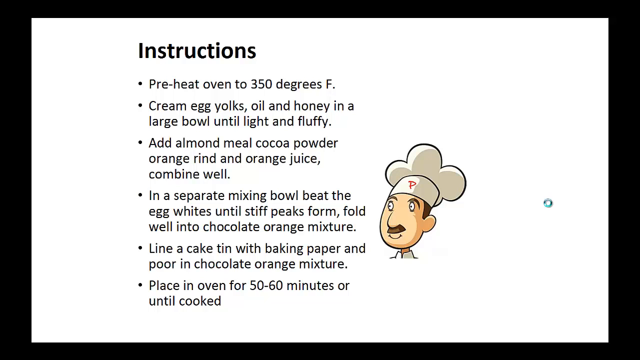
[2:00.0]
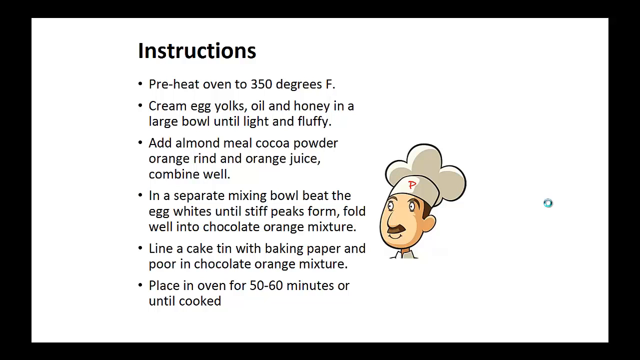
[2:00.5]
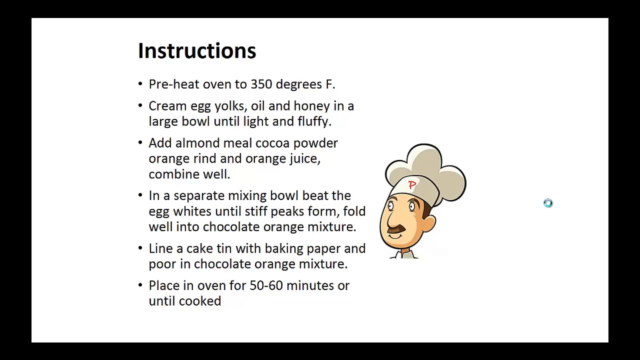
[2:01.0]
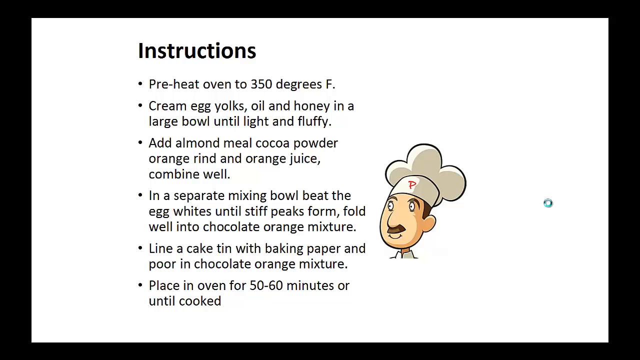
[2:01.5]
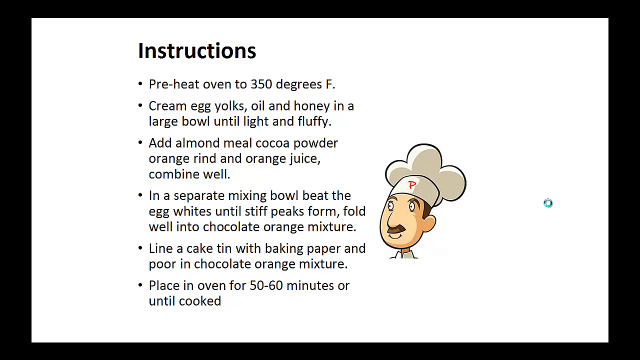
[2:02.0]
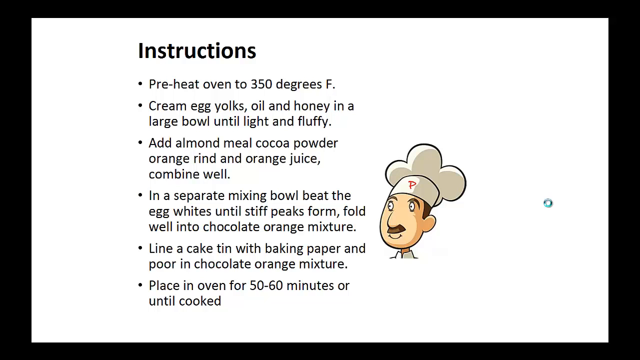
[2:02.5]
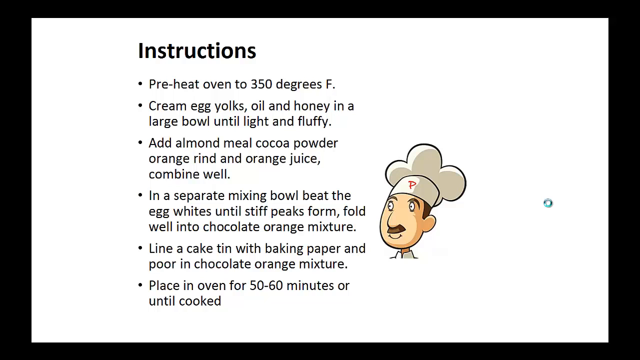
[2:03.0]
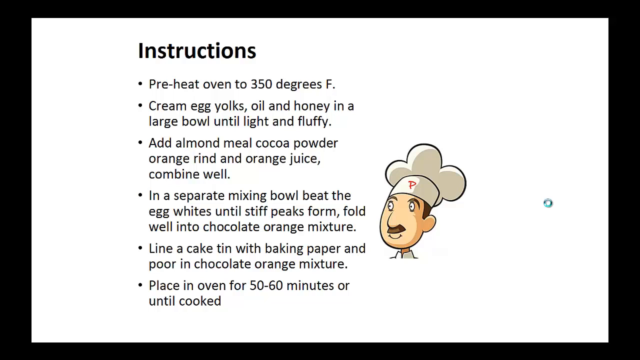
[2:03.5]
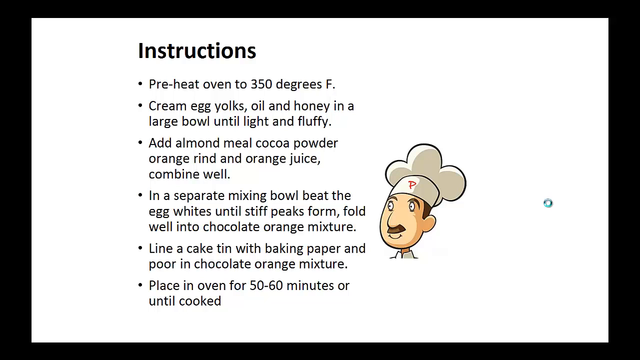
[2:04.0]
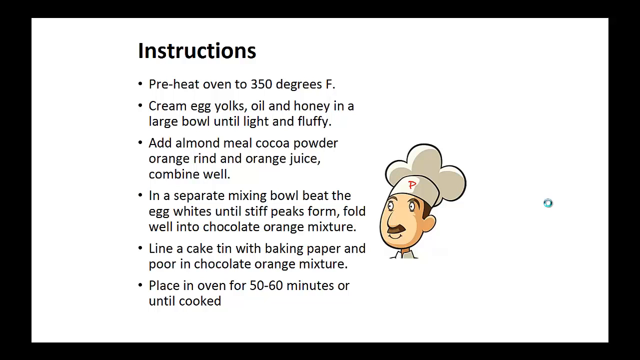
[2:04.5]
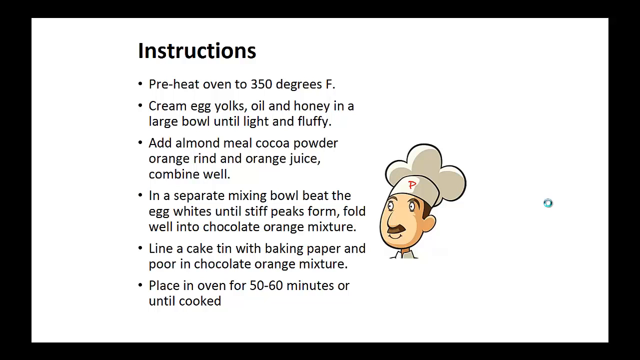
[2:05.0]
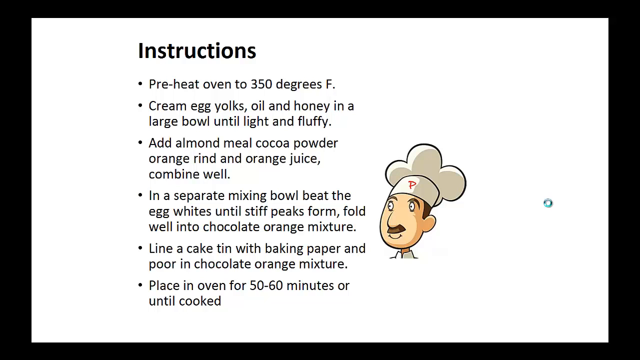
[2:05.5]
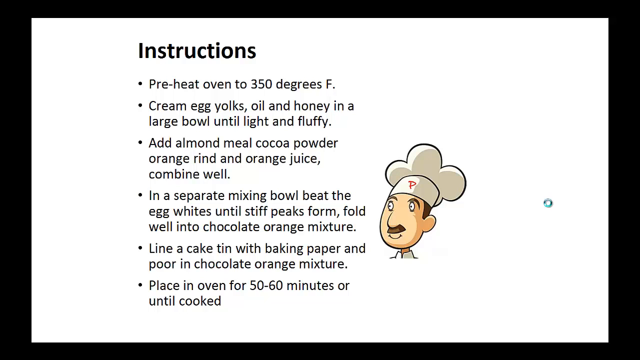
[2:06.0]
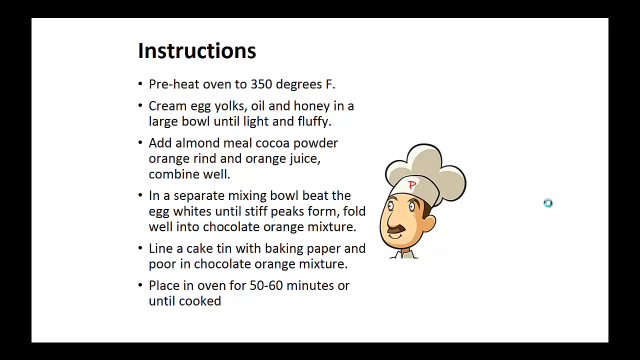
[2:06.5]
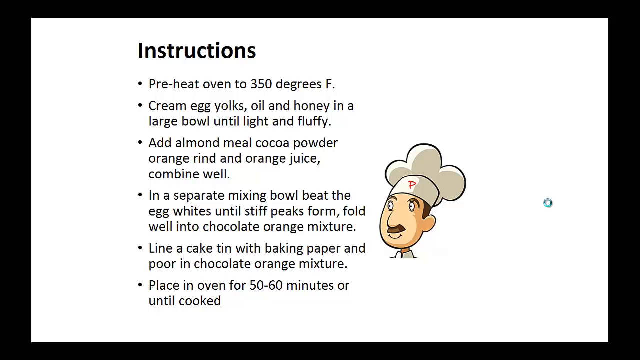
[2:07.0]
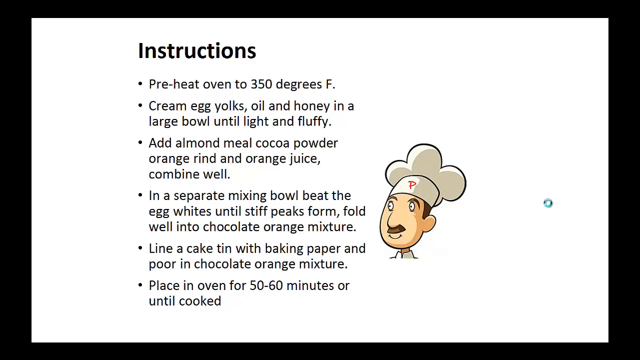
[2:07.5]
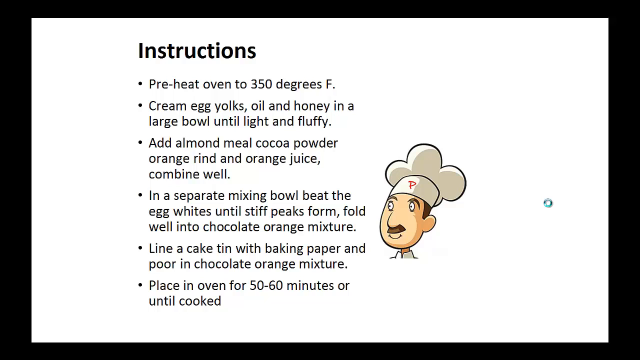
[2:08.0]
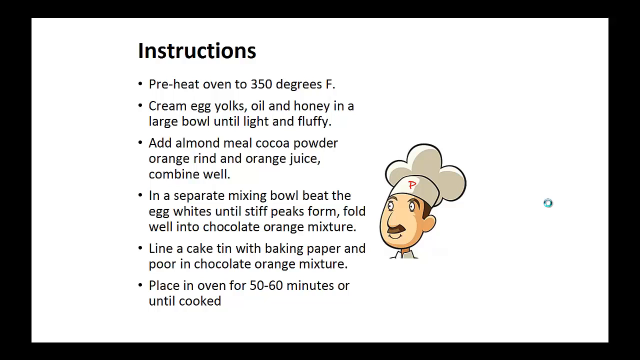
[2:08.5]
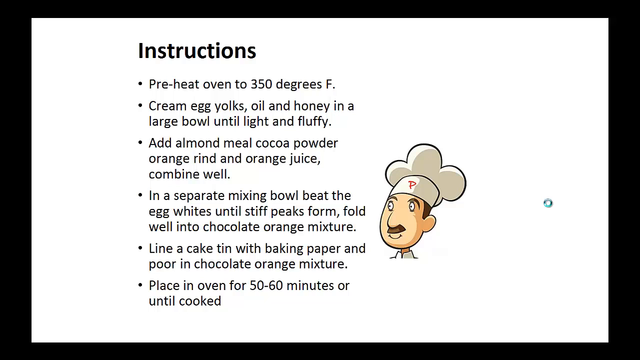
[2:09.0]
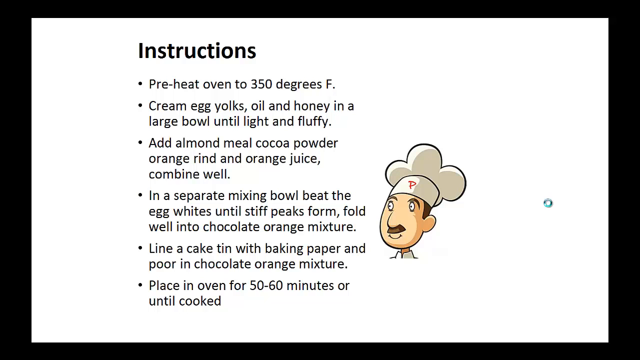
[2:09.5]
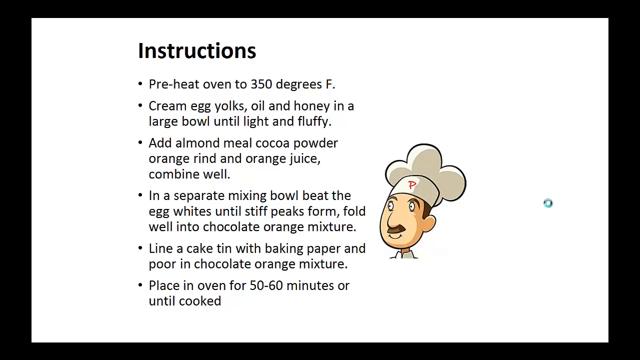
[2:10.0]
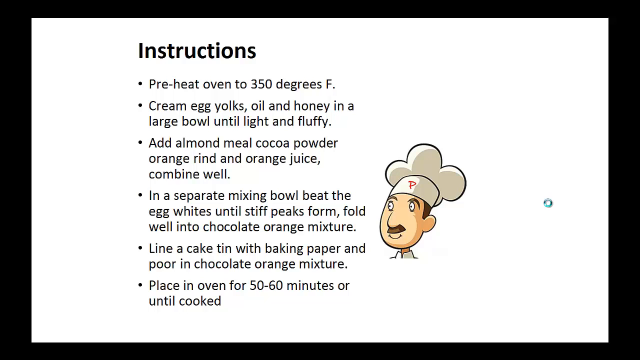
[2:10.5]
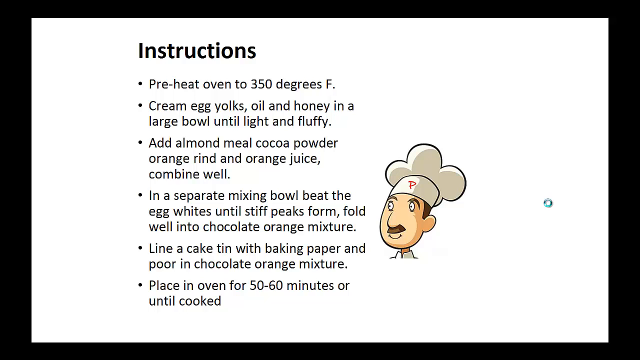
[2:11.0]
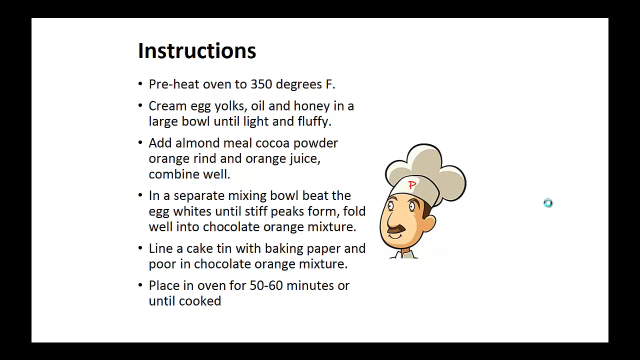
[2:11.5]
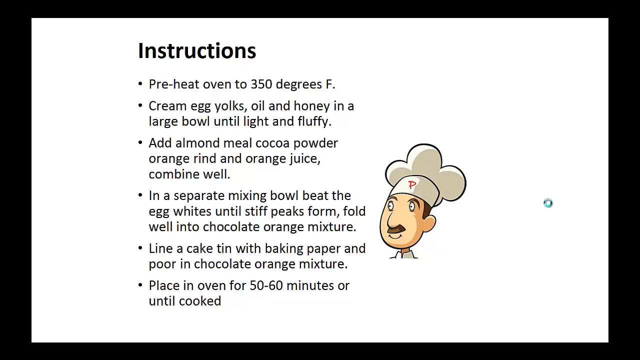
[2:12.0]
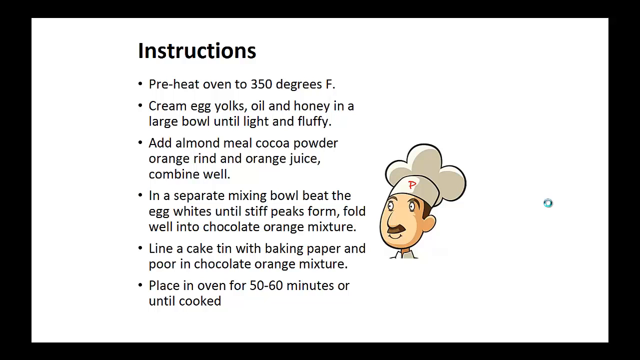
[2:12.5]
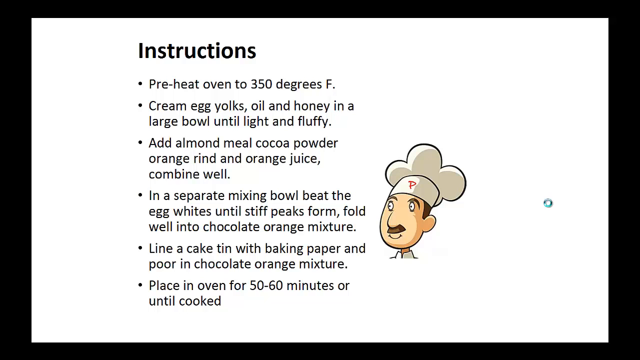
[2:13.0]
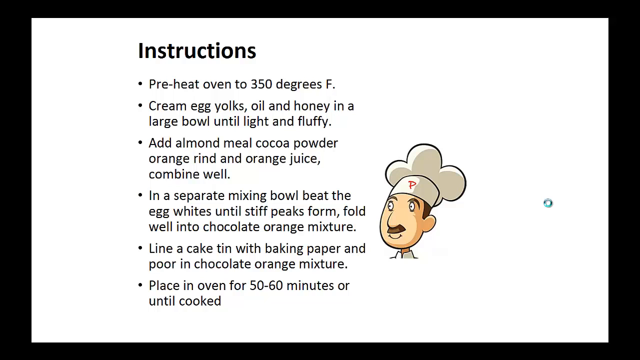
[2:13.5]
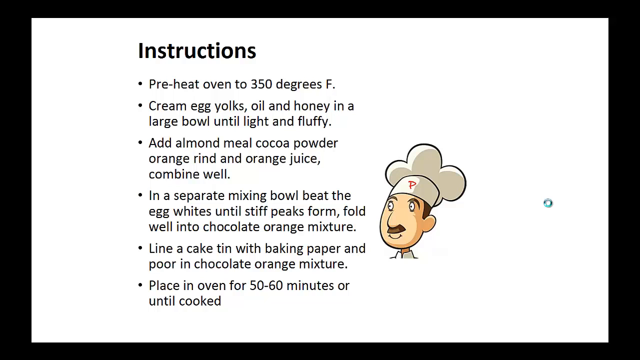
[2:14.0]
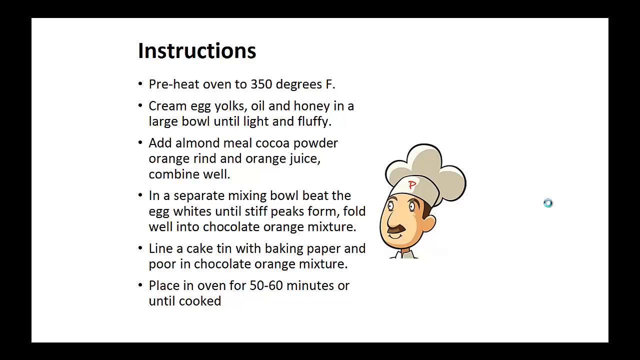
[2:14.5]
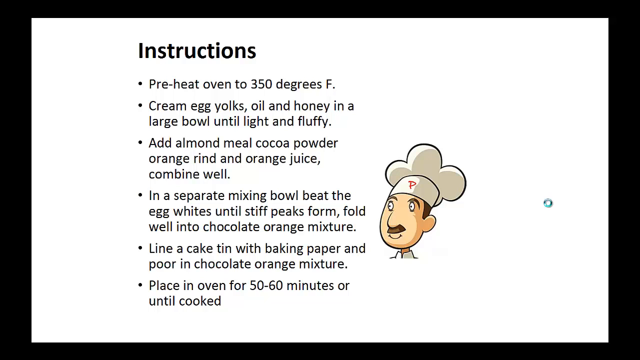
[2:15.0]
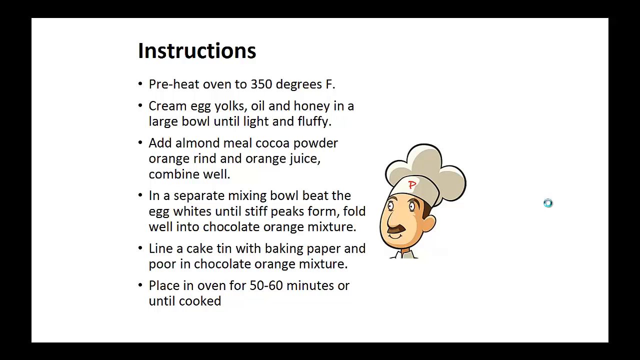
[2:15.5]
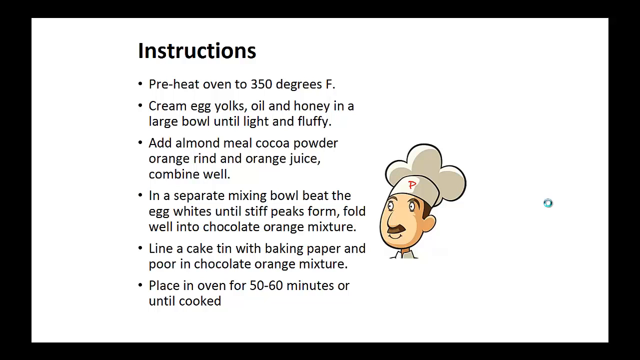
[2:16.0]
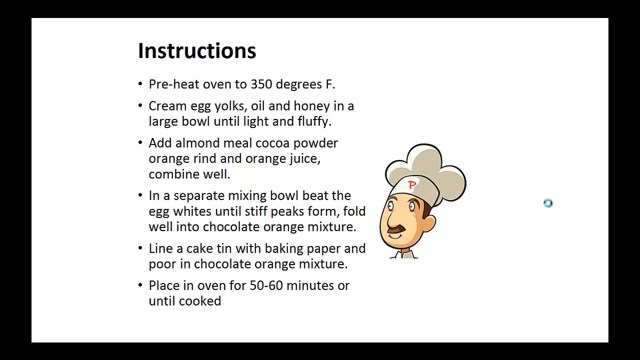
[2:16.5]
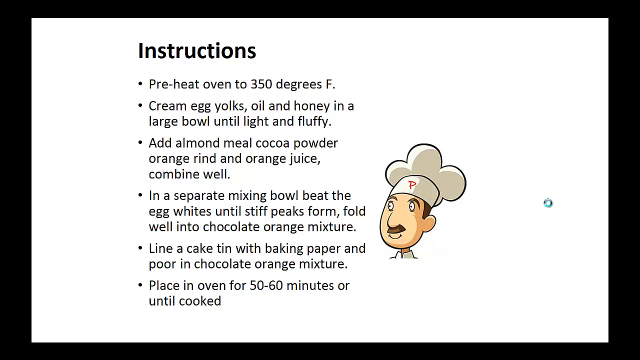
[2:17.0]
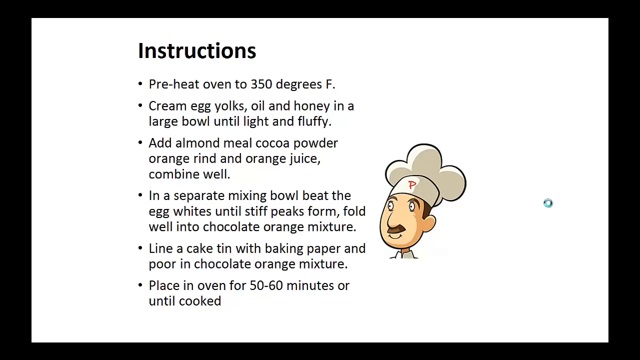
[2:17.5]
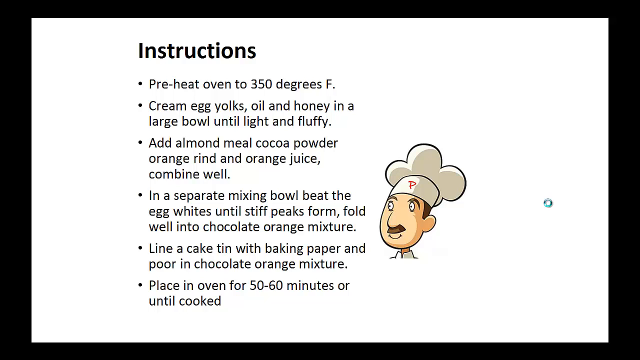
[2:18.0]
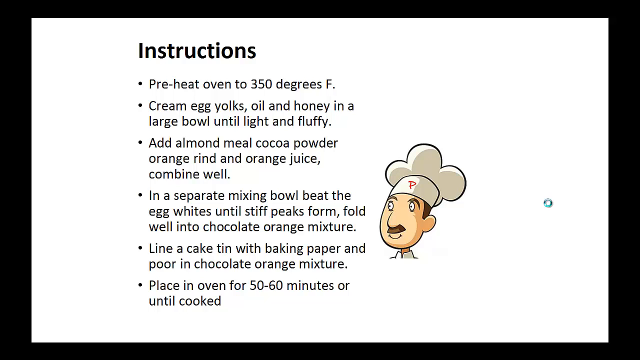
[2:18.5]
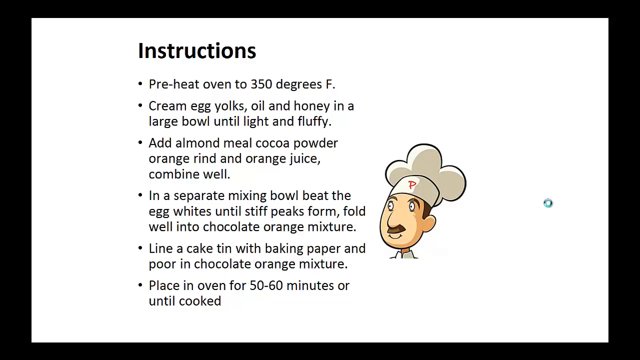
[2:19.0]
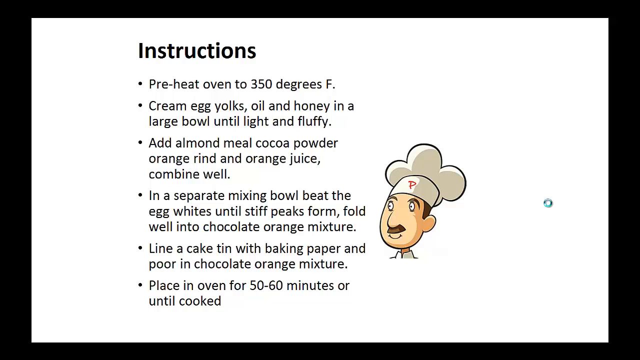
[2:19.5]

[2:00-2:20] The frame still has a black border on the sides, top and bottom around a white base, with the green circle on the right of the frame and the chef image still on the right. Under the heading "instructions", starting from about halfway into the left side of the frame, the bullet points read: "preheat oven to 350 degrees f", "cream egg yolks oil and honey in a large bowl until light and fluffy", "add almond meal cocoa powder orange rind and orange juice combine well", "in a separate mixing bowl beat the egg whites until stiff peaks", and "line a cake tin with baking paper and pour in chocolate orange mixture".